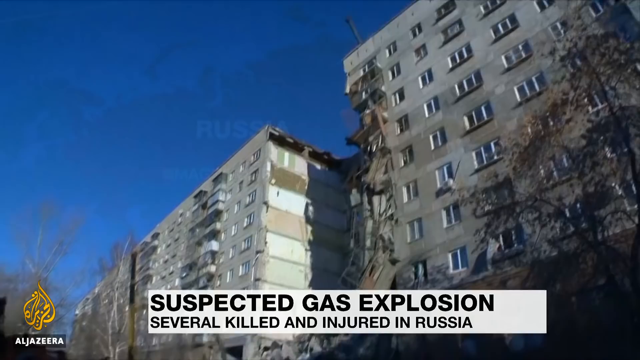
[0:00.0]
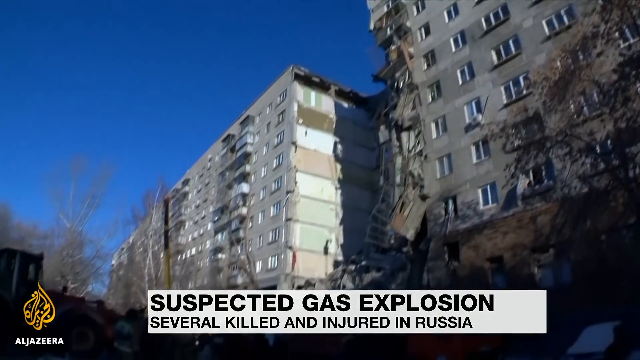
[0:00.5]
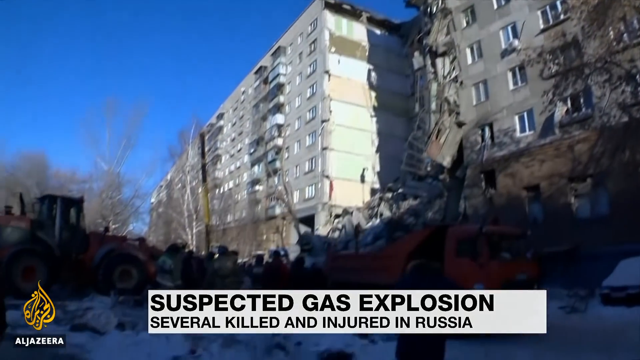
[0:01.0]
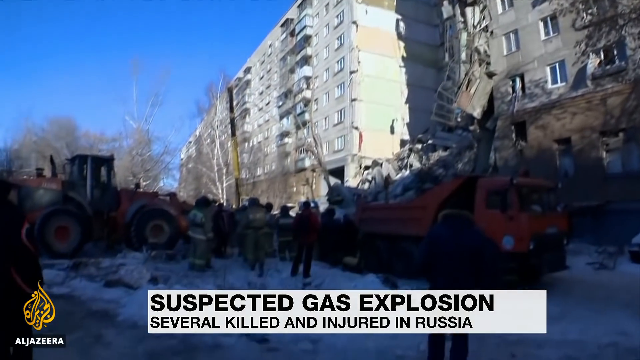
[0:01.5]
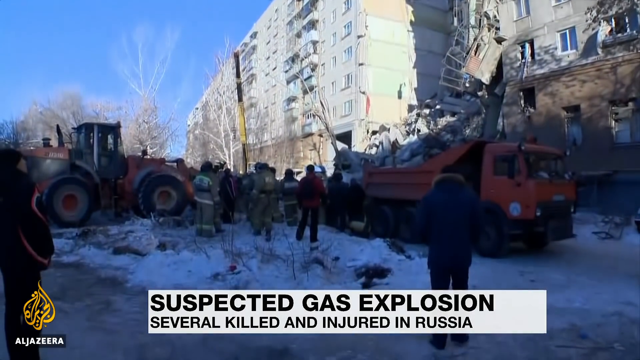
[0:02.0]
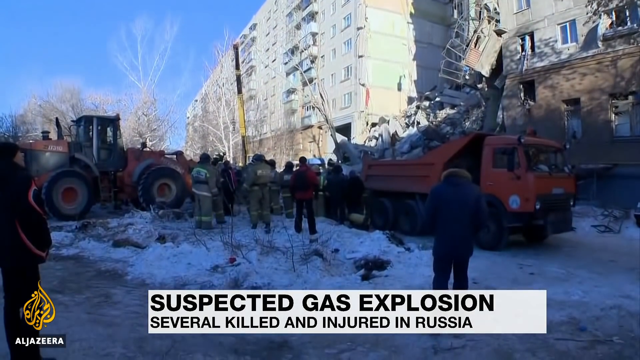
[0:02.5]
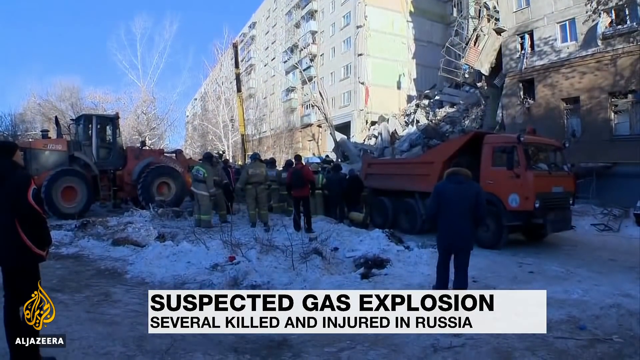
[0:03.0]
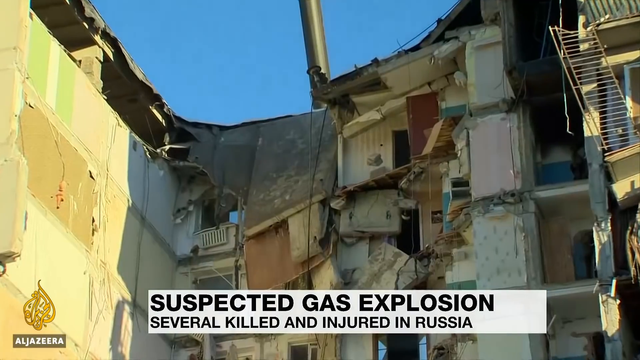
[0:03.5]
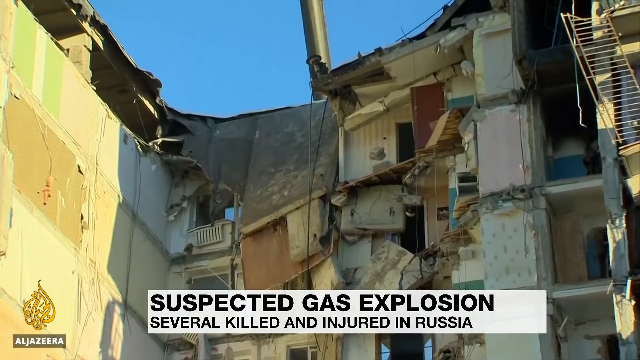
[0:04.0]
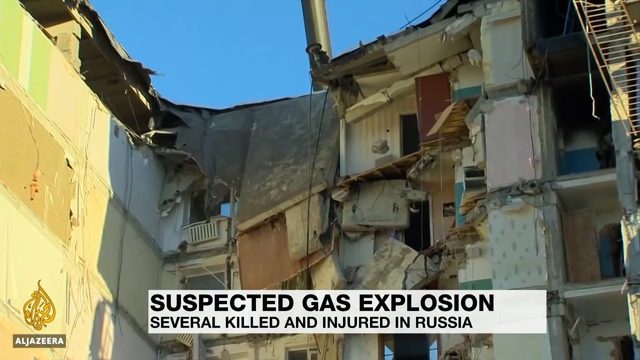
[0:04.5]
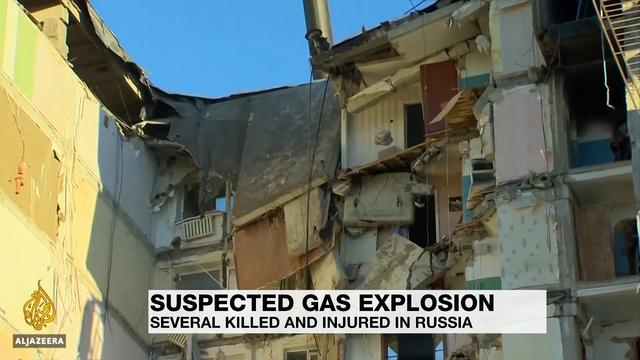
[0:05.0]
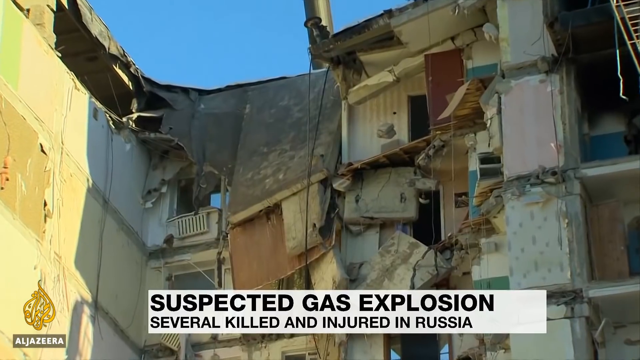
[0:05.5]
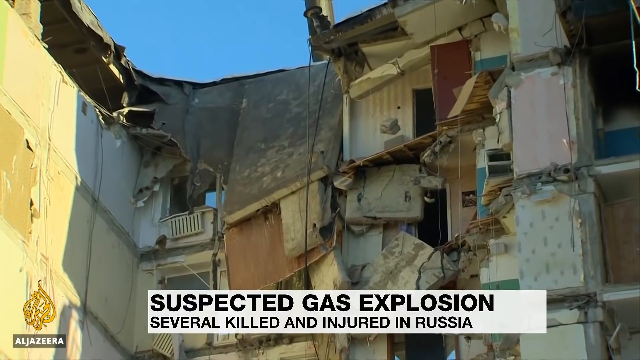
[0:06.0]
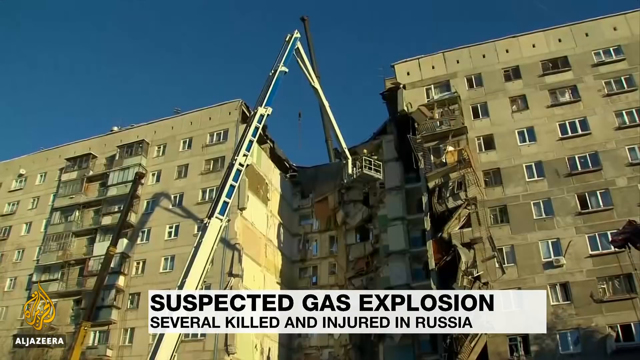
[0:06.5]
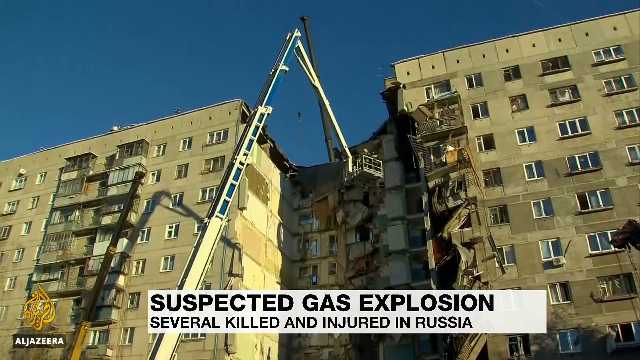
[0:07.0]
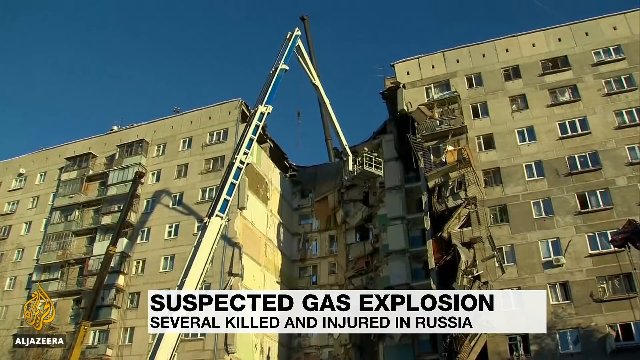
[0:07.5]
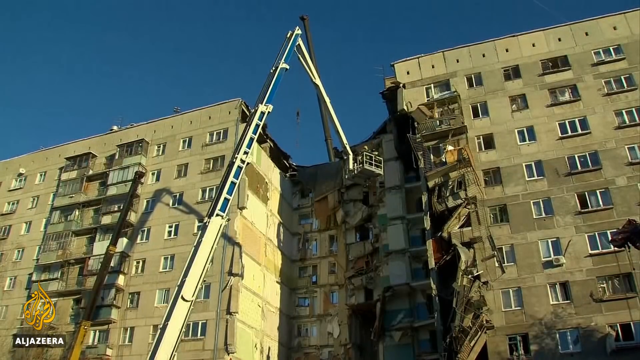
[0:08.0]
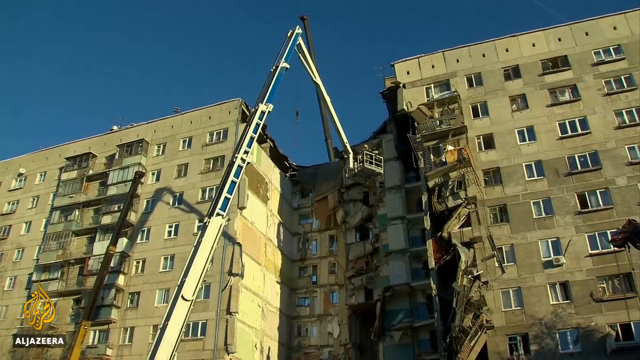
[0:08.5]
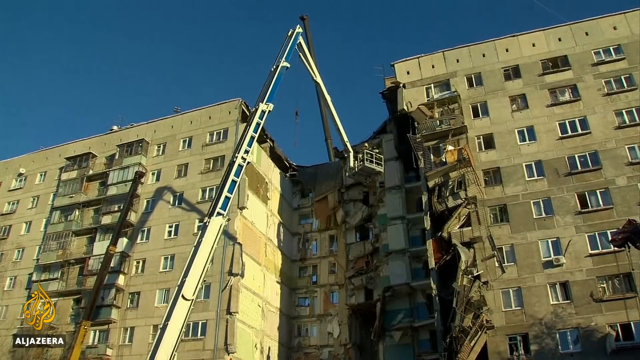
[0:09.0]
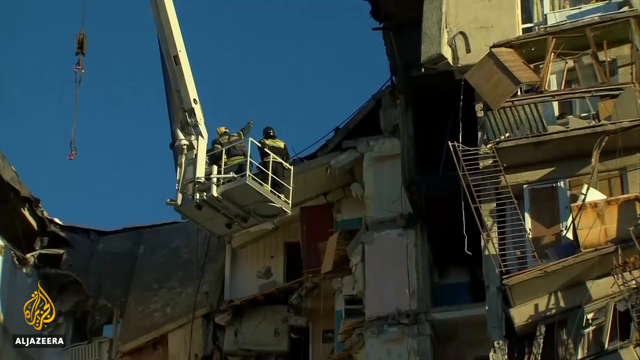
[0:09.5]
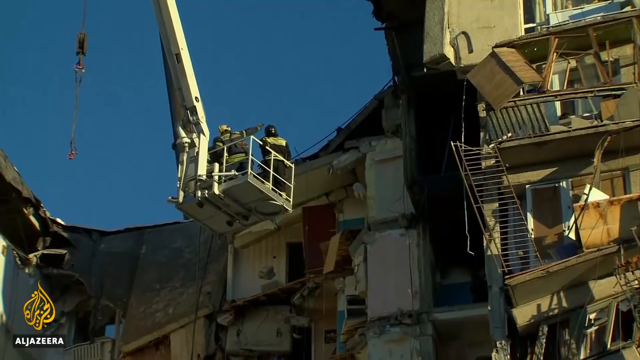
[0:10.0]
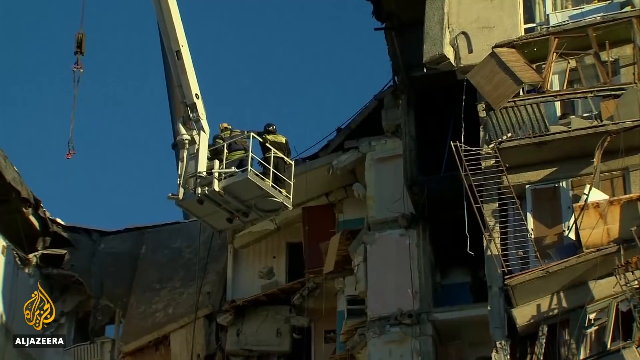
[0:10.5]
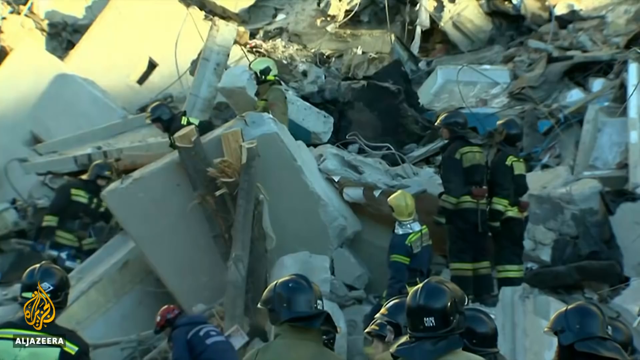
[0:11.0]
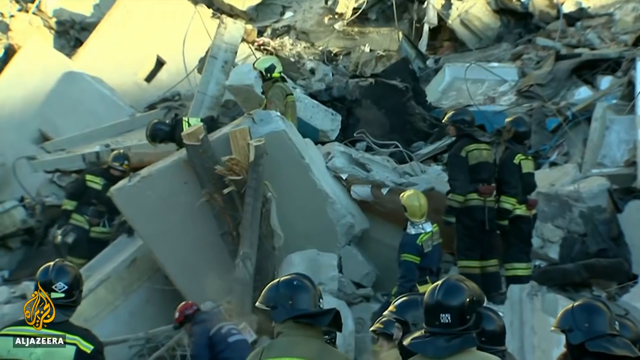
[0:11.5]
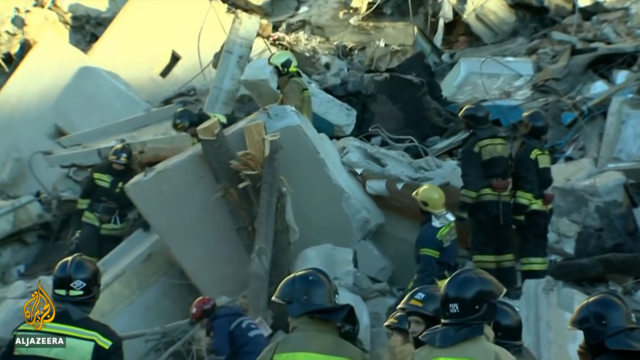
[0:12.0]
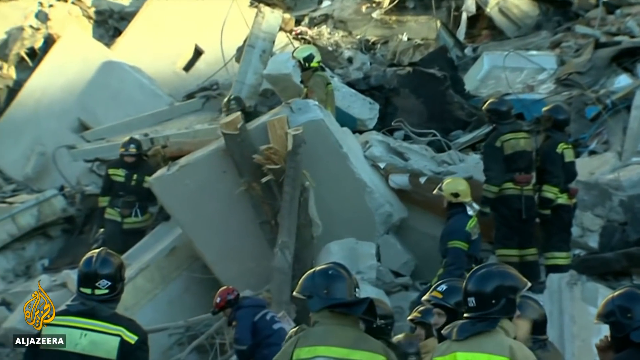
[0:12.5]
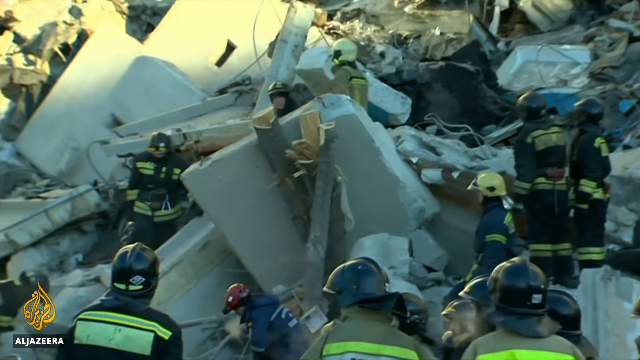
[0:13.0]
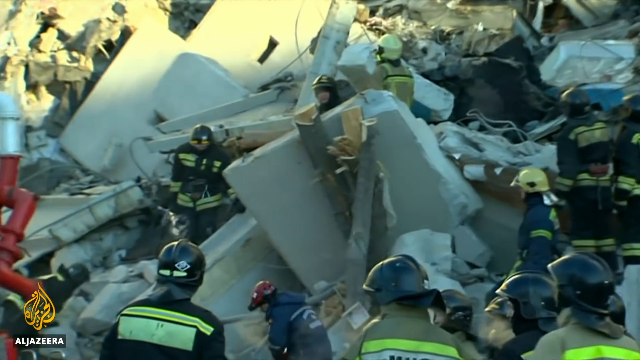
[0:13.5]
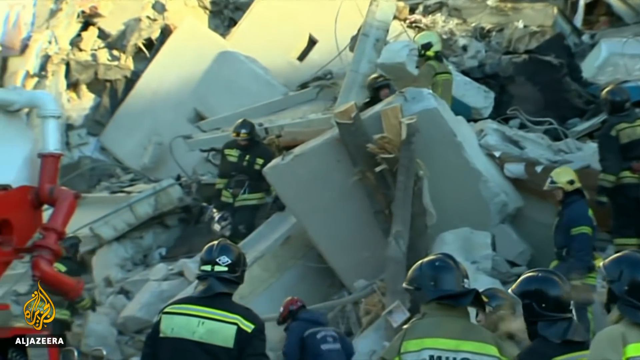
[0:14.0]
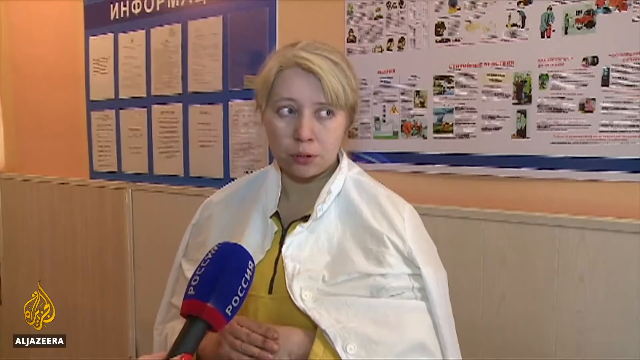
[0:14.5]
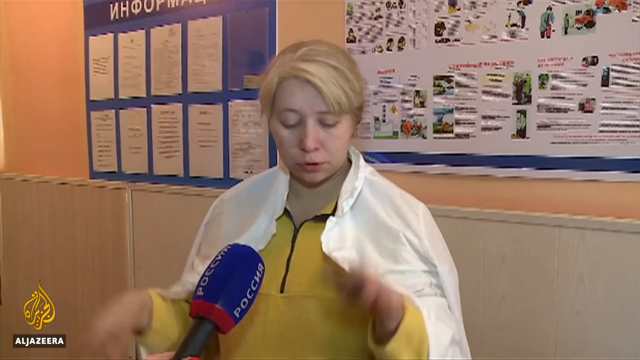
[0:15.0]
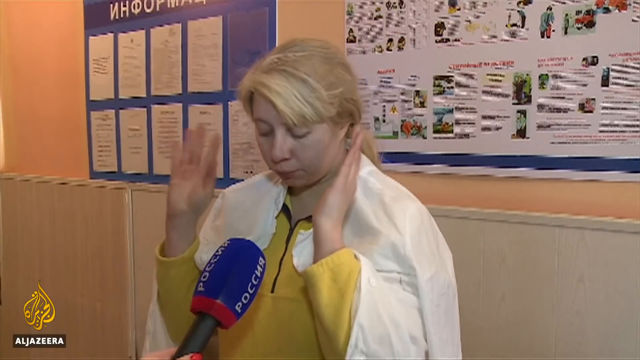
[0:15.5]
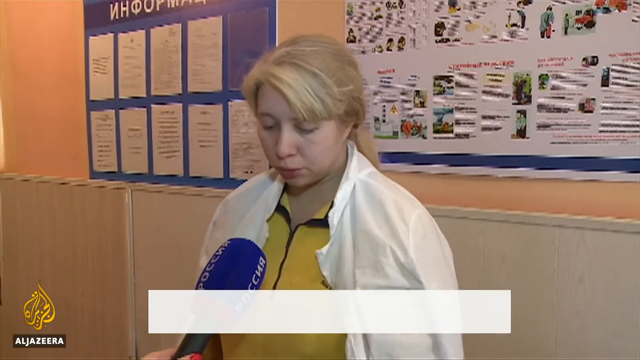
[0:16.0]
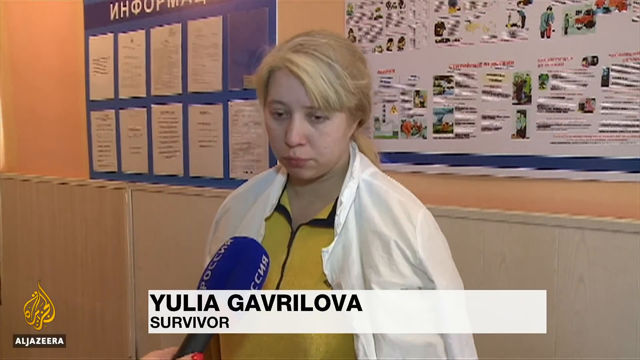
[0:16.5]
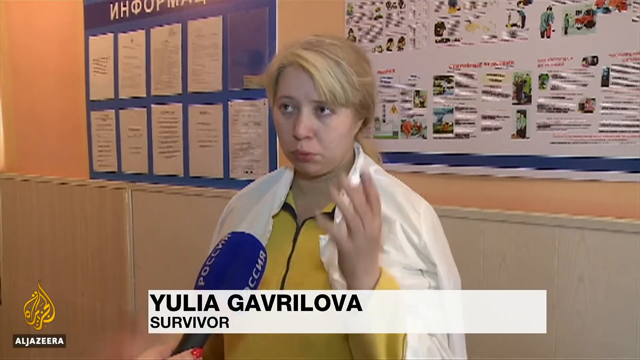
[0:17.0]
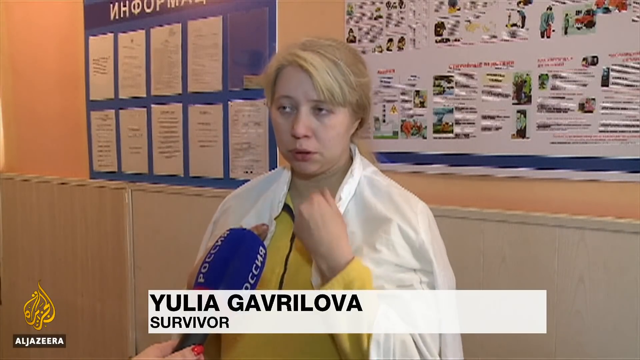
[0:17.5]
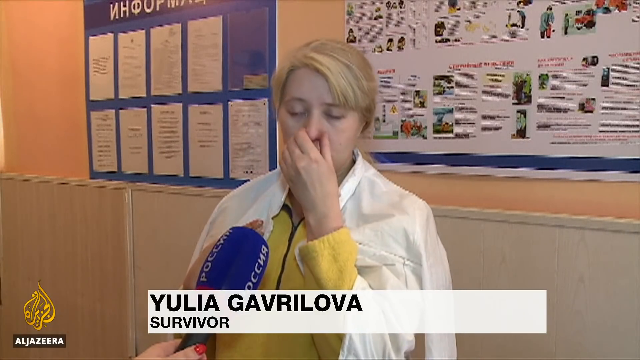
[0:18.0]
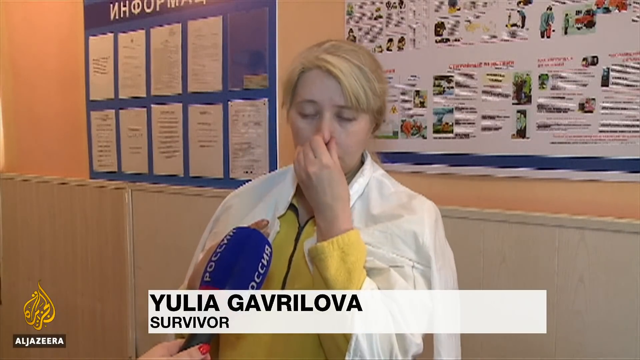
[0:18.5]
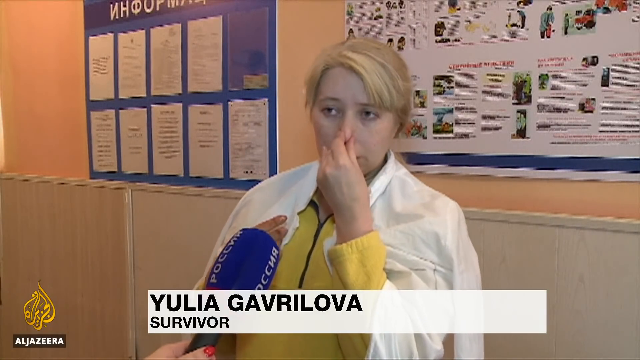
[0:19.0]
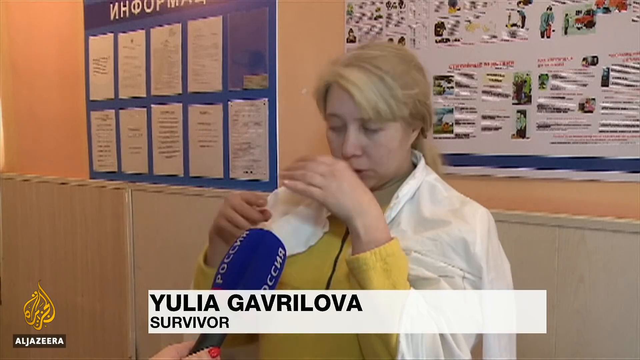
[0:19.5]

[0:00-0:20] A news report from Russia opens with a first page reading "suspected gas explosion, several killed and injured in Russia." Next, a large screen shows a front view of a damaged building. Another large screen shows rescue platforms visible as an operation is underway. Firefighters and what appear to be search and rescue personnel sift through a large pile of rubble in a scene of devastation. Finally, a woman identified as Yulia Gavrilova, a survivor, is interviewed. She is visibly distressed, holding her hand to her mouth and speaking into a microphone, apparently giving an account of the event.